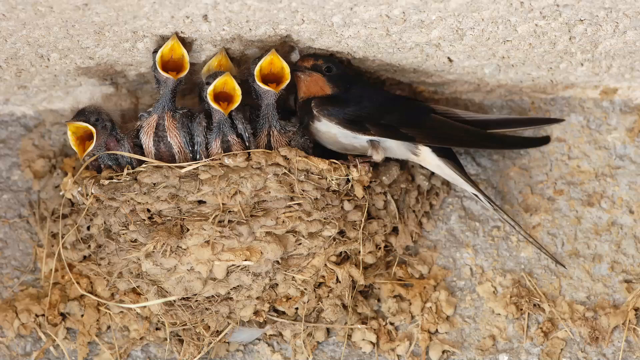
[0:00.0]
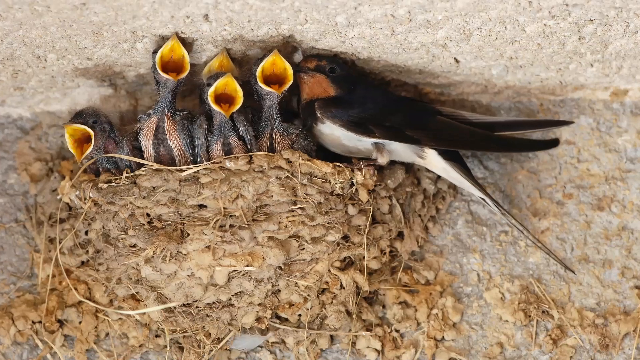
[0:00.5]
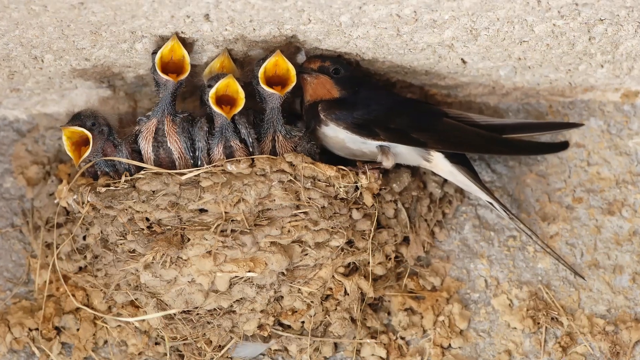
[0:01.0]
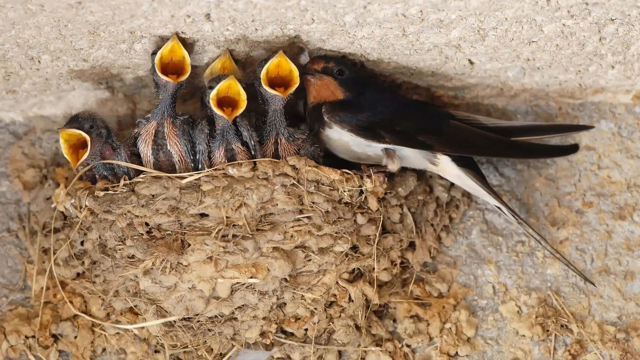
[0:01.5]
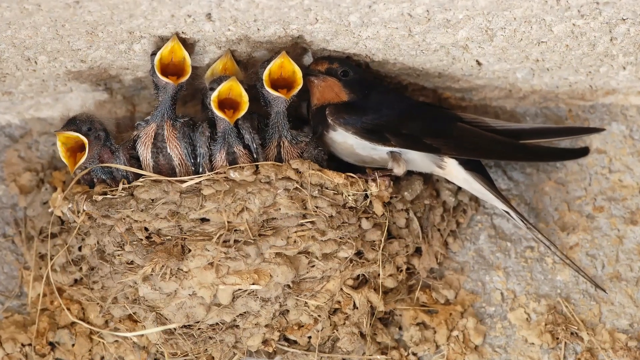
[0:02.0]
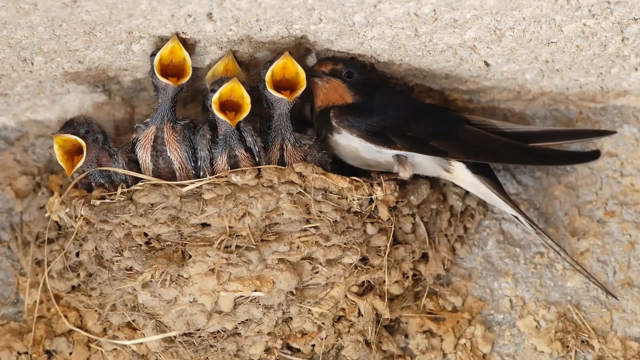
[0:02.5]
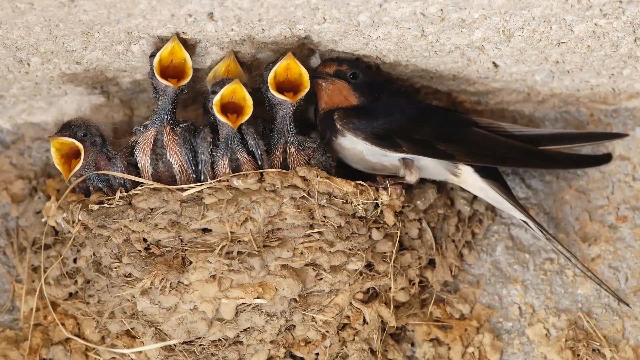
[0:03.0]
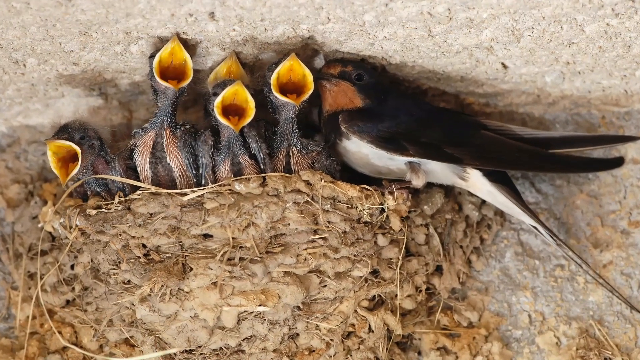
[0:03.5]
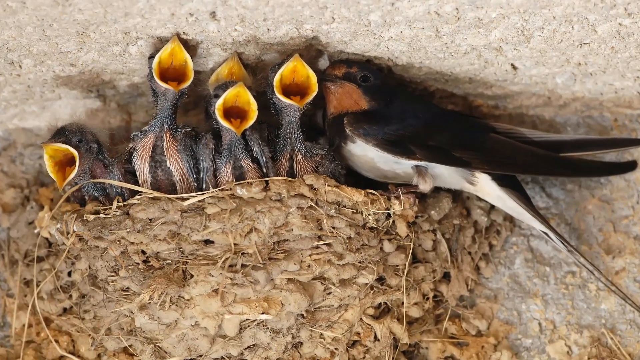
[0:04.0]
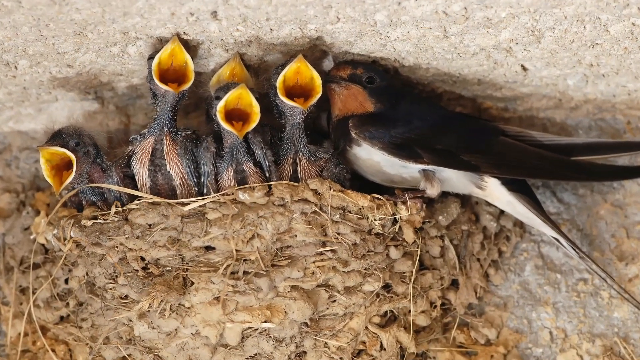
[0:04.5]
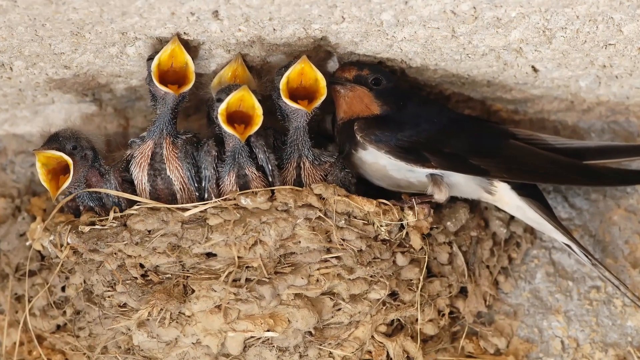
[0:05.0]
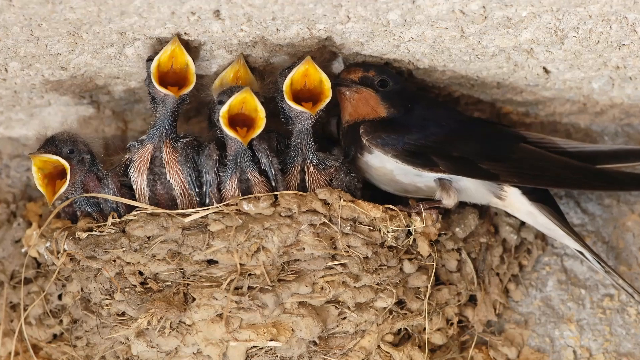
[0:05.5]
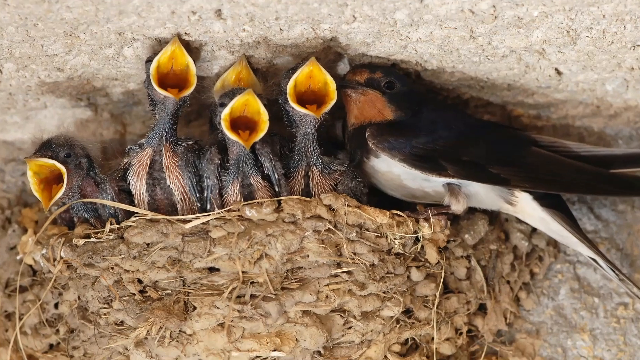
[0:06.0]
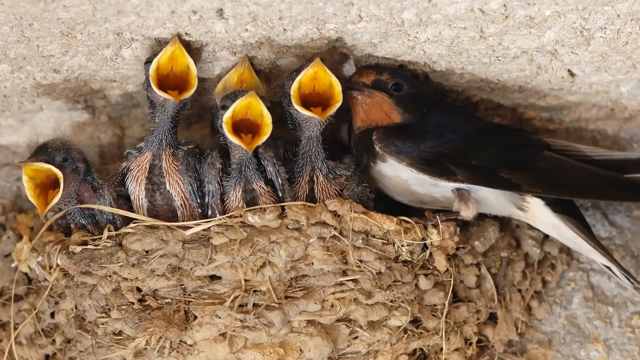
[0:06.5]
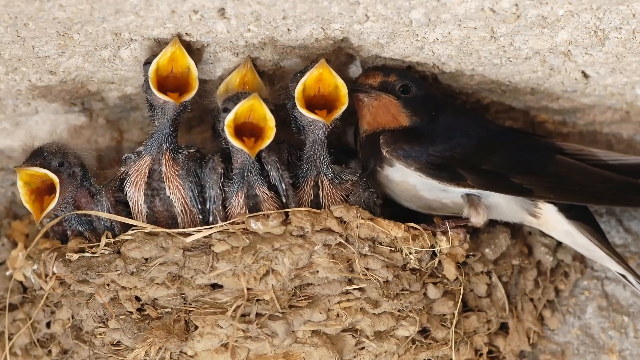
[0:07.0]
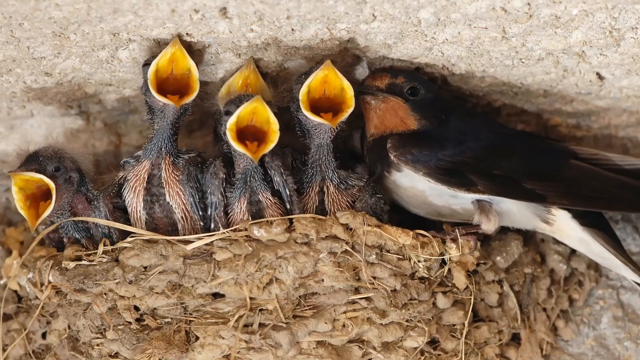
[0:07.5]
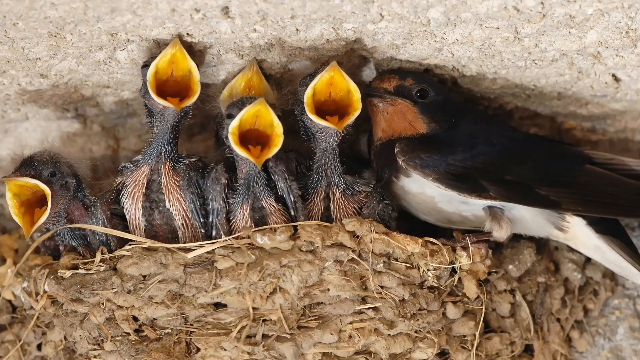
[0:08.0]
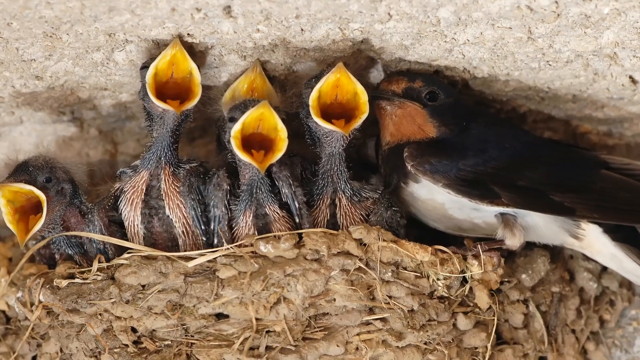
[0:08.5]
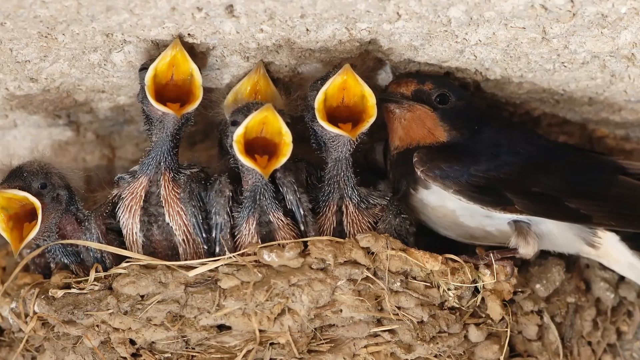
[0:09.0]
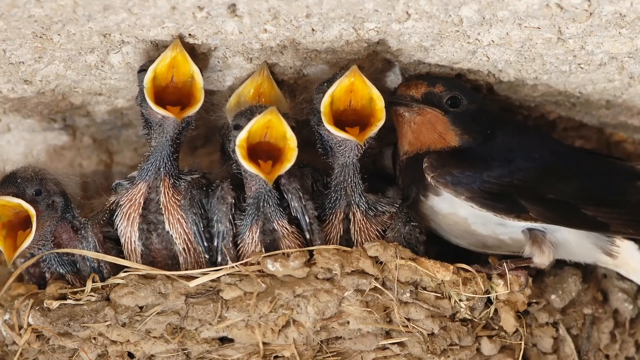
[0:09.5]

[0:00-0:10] The video seems to be a single static image with no apparent action; the view slowly zooms in. The image shows several young birds, apparently five hatchlings, with their mouths all wide open. They are a dark bird, almost black, and their open mouths reveal bright yellow insides. They appear to be in a nest. On the right side of the nest is possibly the parent bird, which has mostly black feathers, a white underside, and a bit of brown near its beak and above its eyes. It is nestled on the nest next to the five young birds. The young birds appear to be hungry, waiting to be fed.